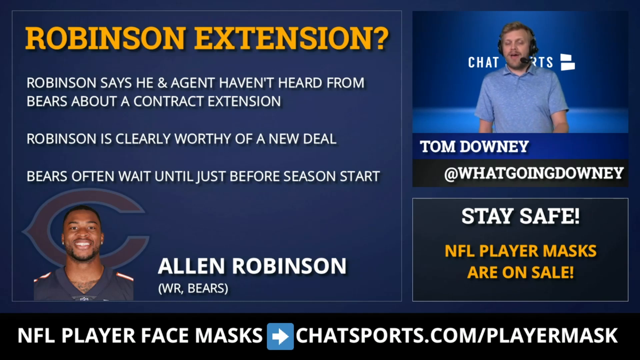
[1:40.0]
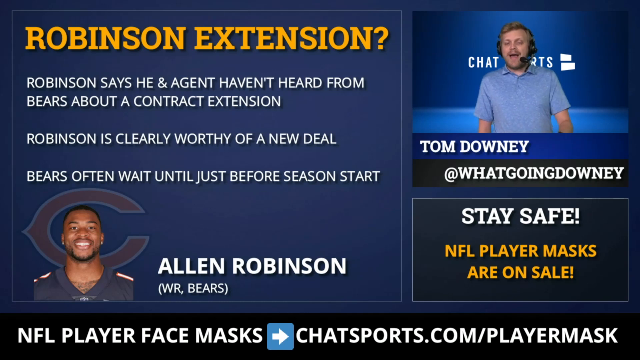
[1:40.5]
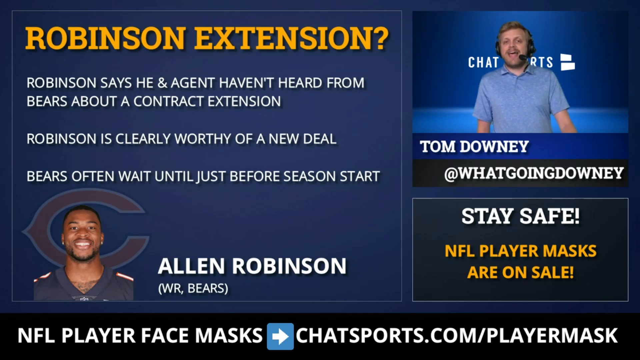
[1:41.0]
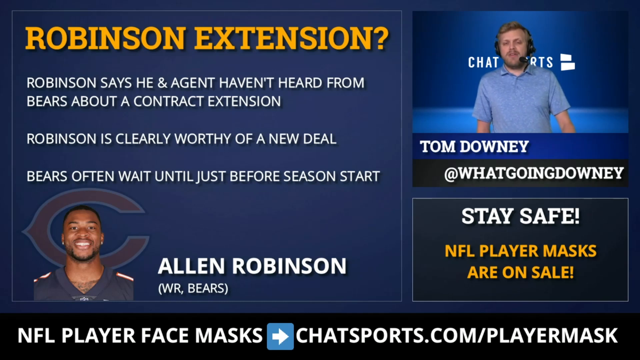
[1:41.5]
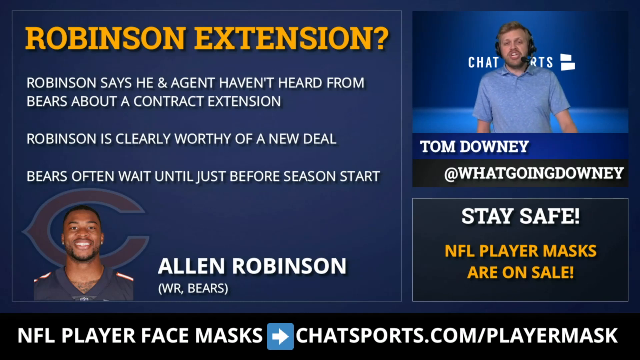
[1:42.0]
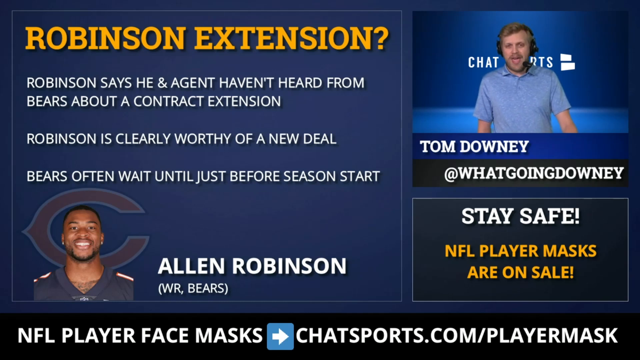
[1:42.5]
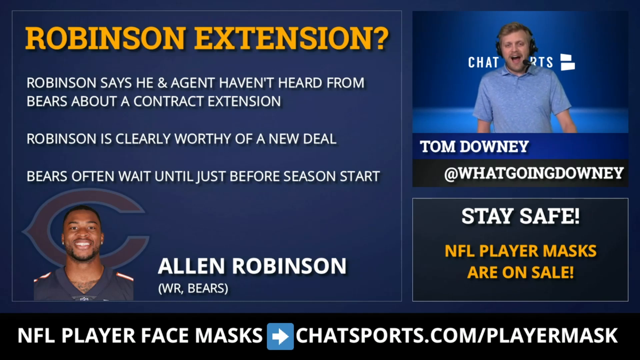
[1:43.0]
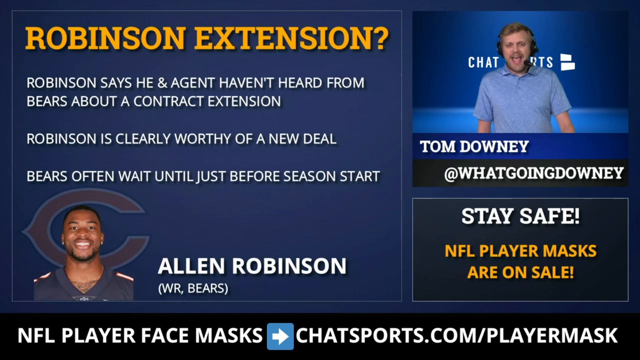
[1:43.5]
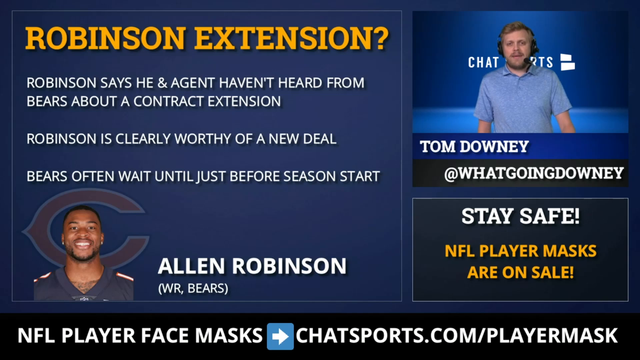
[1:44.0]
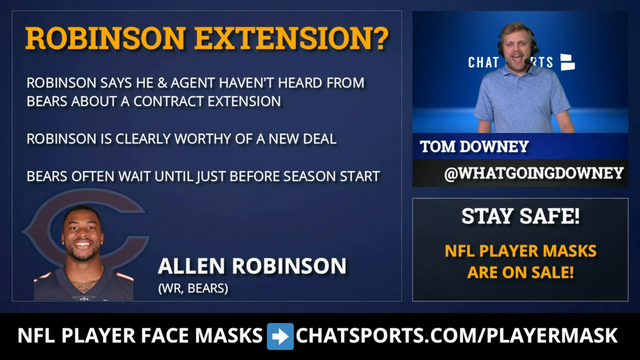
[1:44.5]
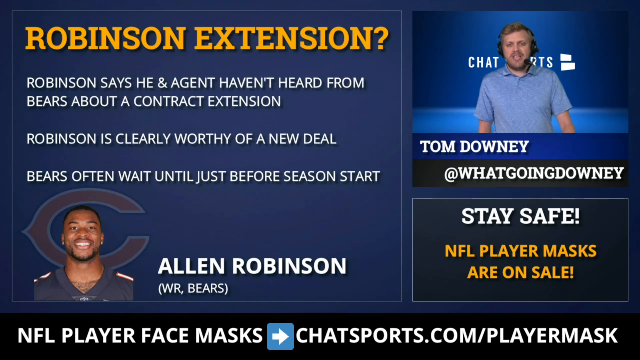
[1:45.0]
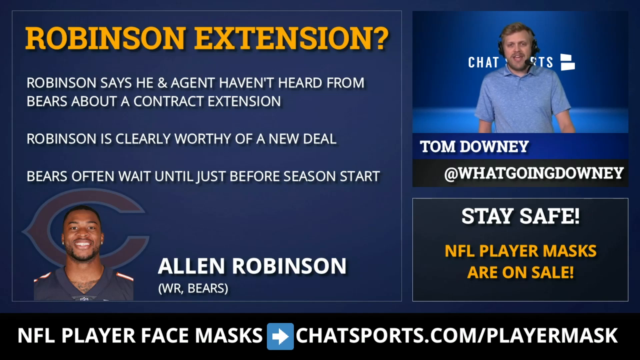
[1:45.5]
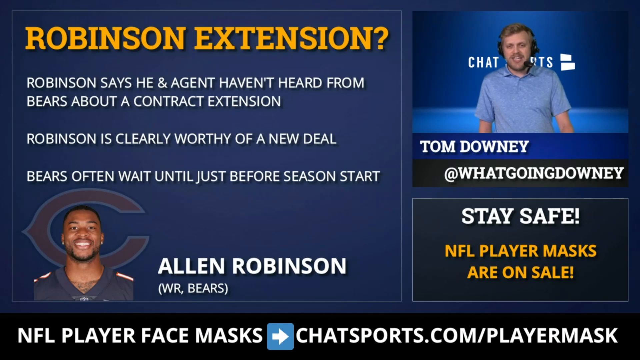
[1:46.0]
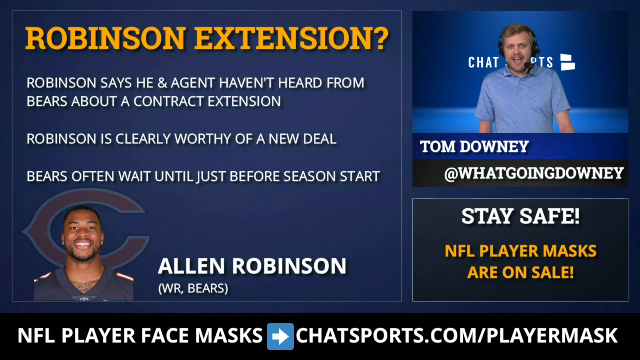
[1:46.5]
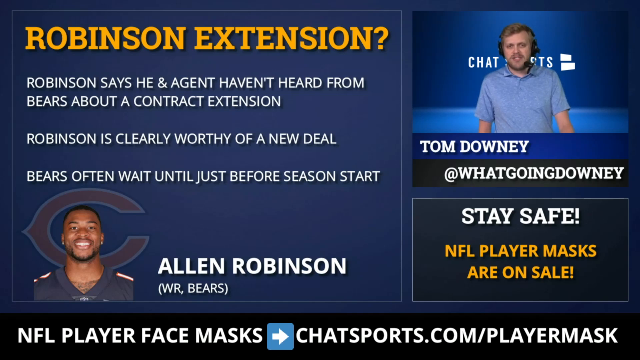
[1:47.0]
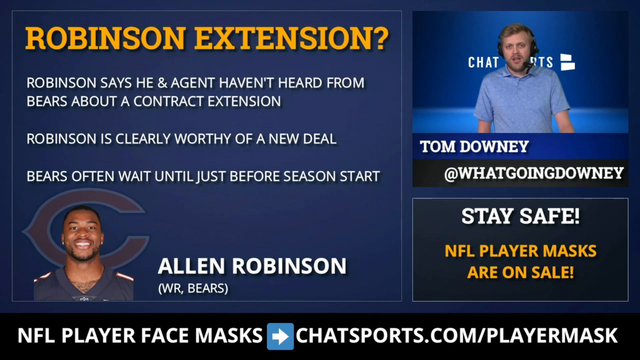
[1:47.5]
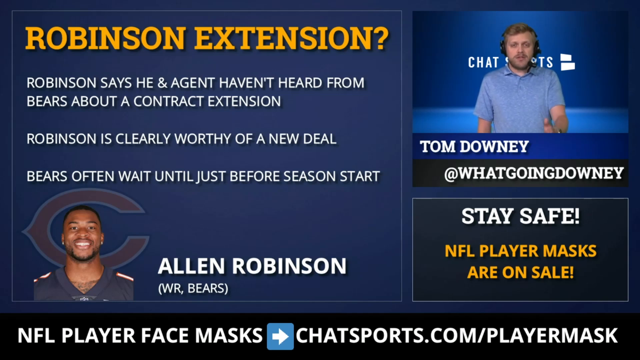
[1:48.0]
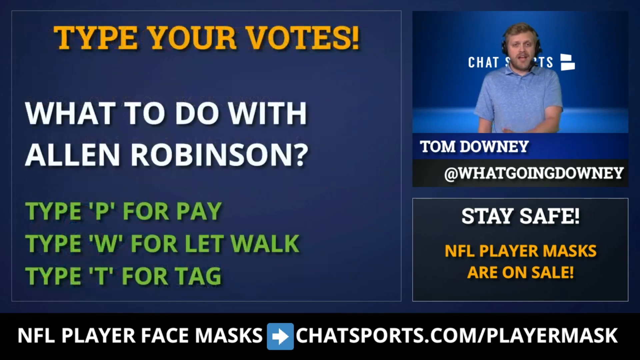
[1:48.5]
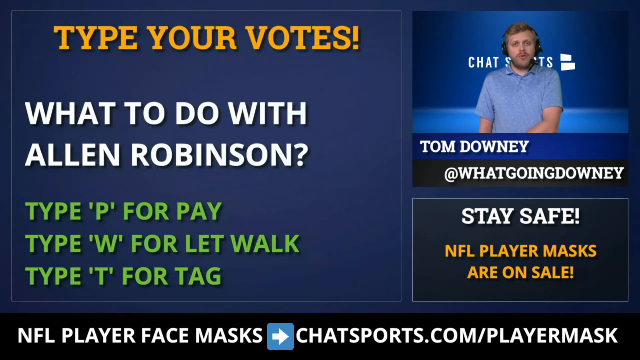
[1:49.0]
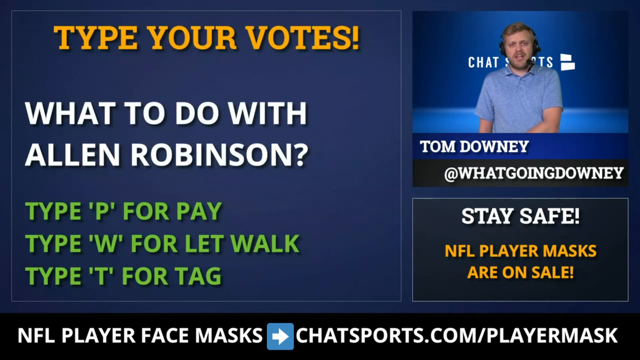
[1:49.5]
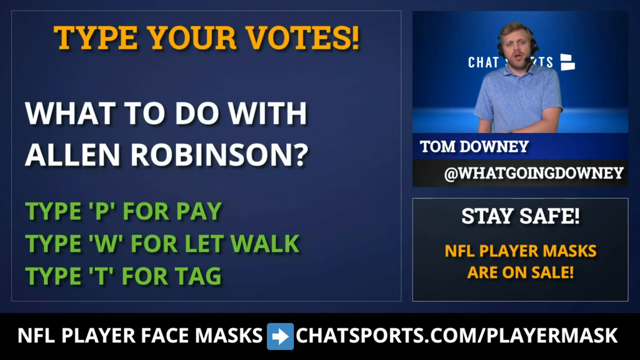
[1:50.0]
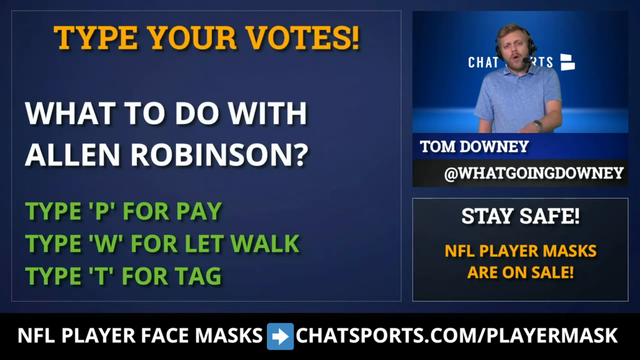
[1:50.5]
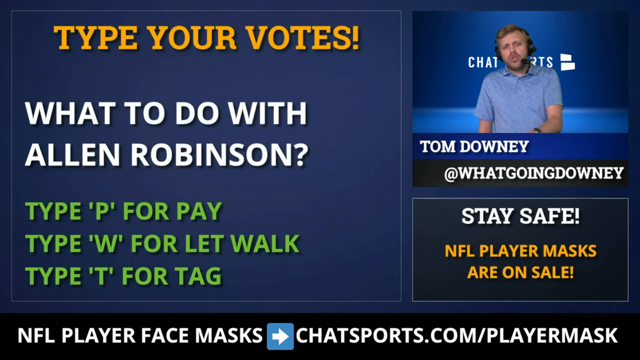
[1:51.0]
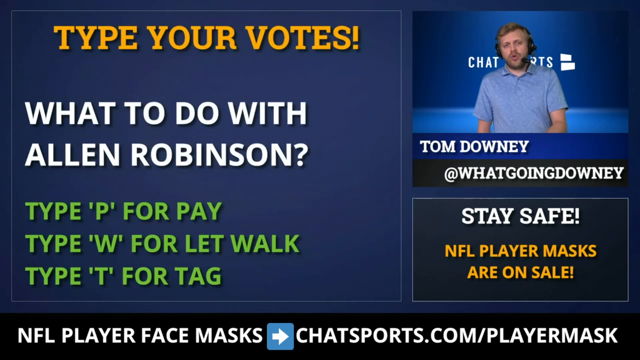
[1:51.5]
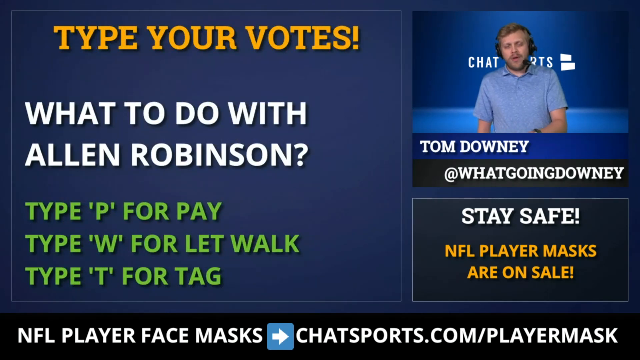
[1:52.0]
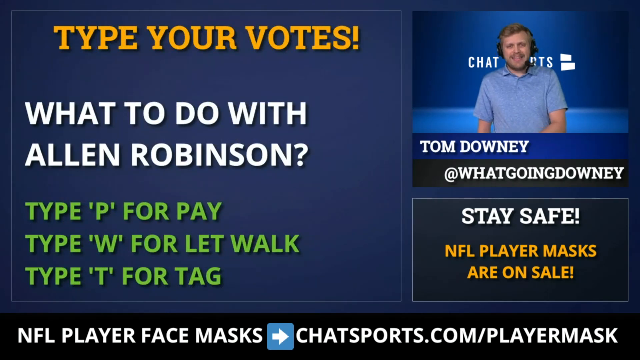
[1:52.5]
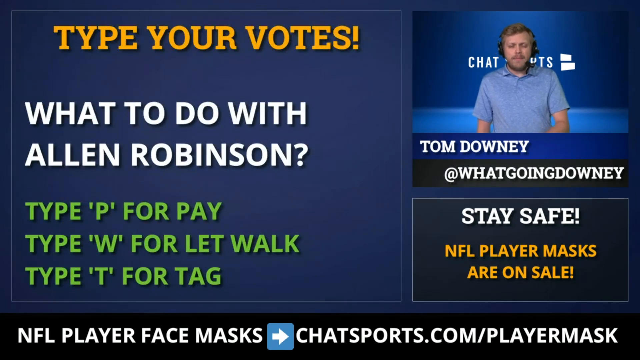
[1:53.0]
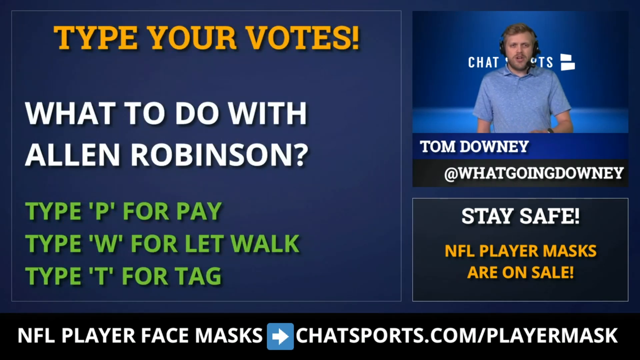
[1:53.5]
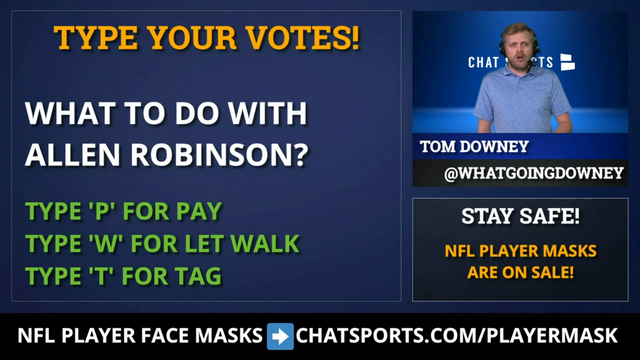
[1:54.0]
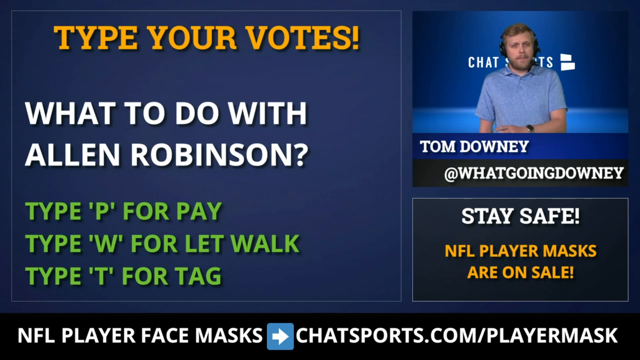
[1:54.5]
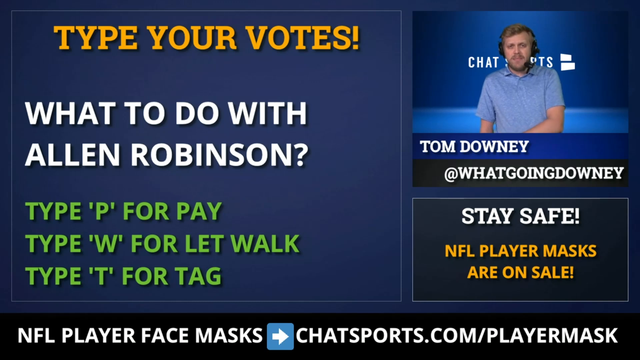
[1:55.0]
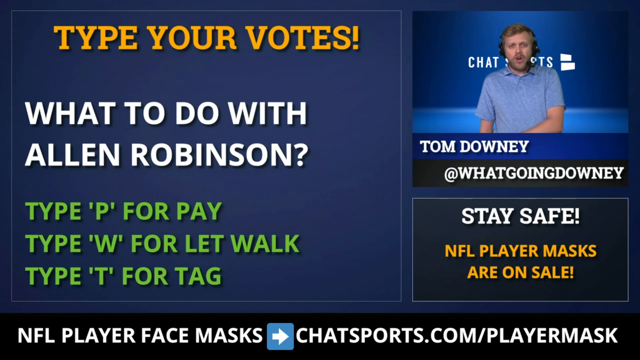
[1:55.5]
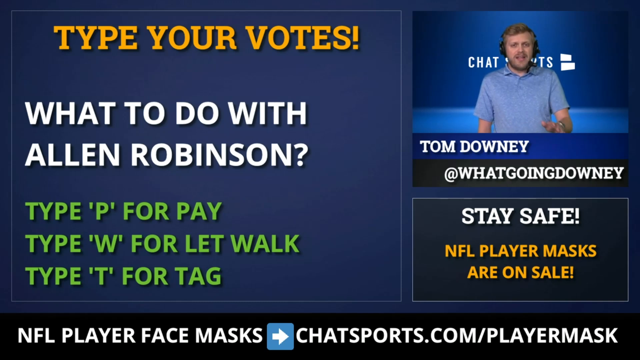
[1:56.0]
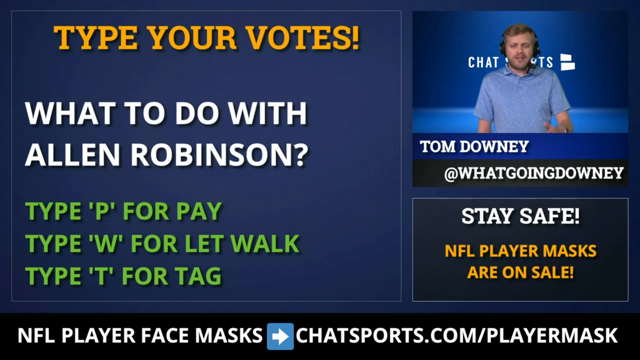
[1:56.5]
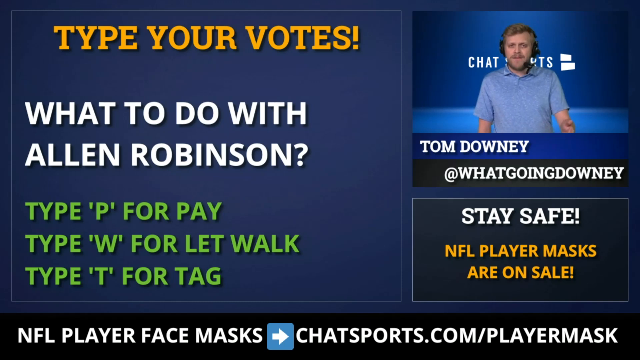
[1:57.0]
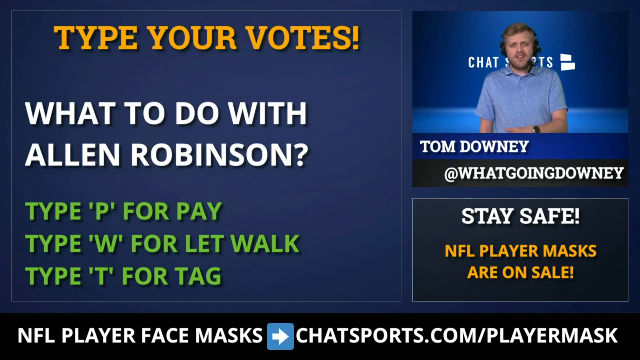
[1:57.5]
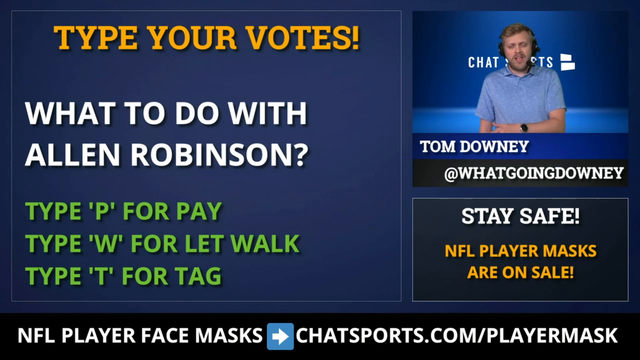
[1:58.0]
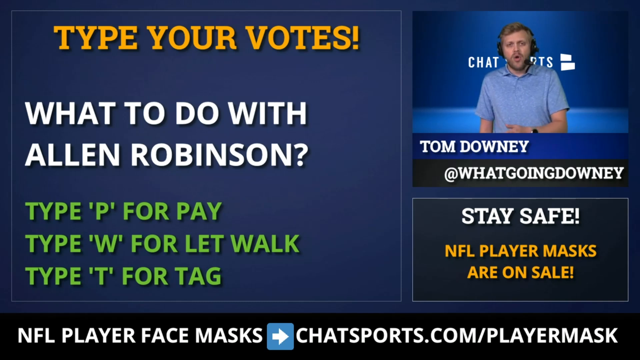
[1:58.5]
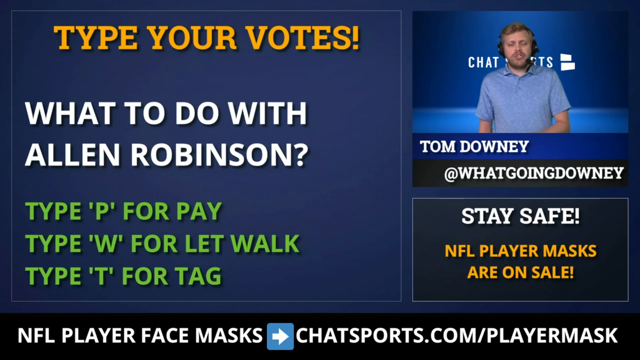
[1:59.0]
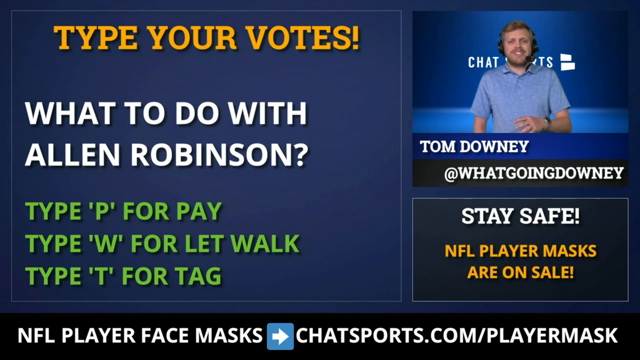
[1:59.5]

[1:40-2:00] A page gives information about Chicago Bears wide receiver Allen Robinson, with "WR, (Bears)" under his name and "Robinson extension?" in orange-yellow at the top. On the right side is Tom Downey, live, conducting a sports chat under the tag "what's going Downey"; he talks on a headset with a microphone that comes around the left side of his face. A box underneath him reads "stay safe" and "NFL player masks are now on sale", and along the bottom it reads "chatsports.com/player mask" and "NFL player face masks". The next page reads "type your votes" and "What to do with Allen Robinson", with "type P for pay", "type W for let walk" and "type T for tag", a poll about the player. It includes a picture of him with a big C behind it.